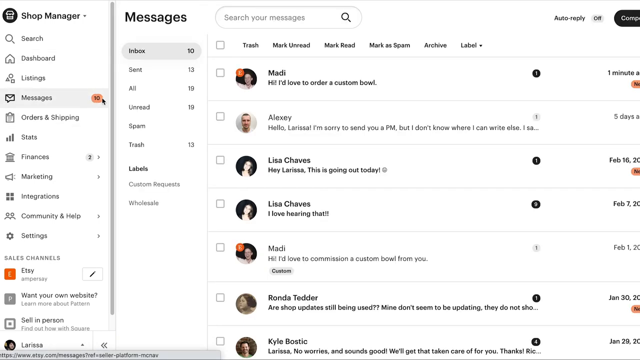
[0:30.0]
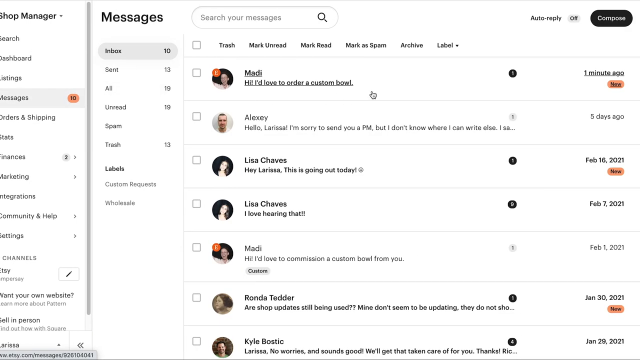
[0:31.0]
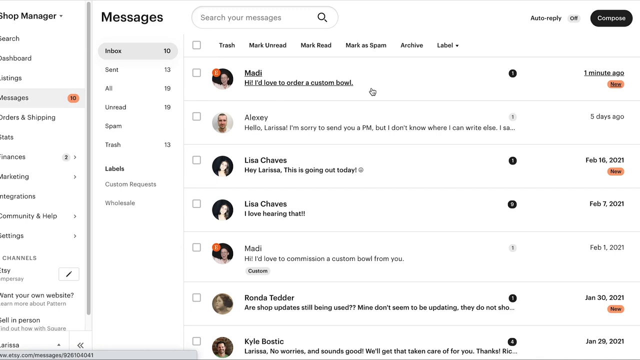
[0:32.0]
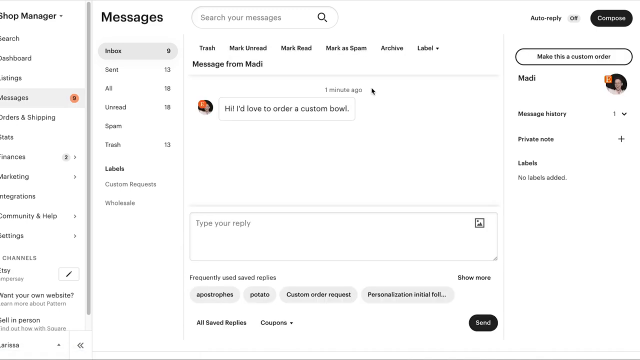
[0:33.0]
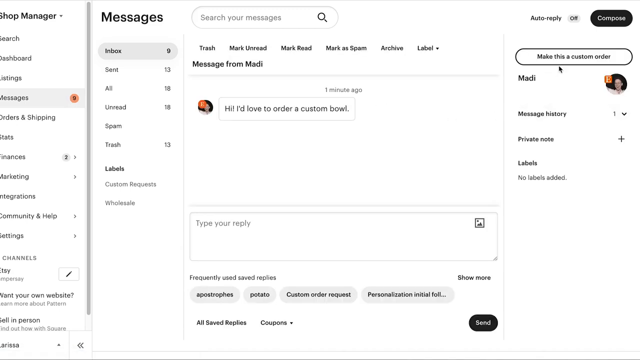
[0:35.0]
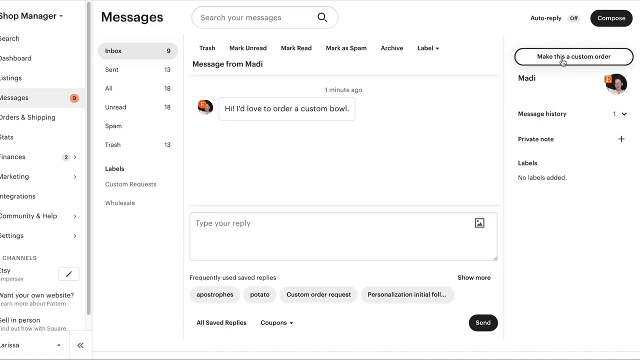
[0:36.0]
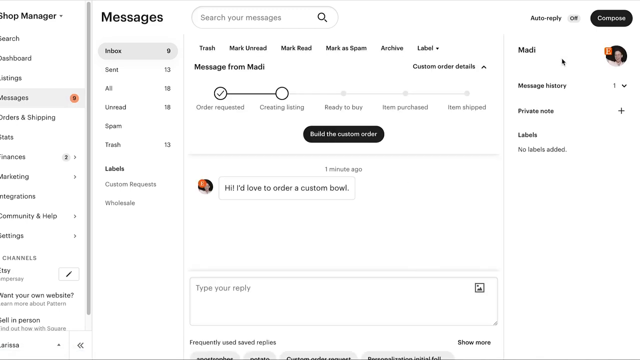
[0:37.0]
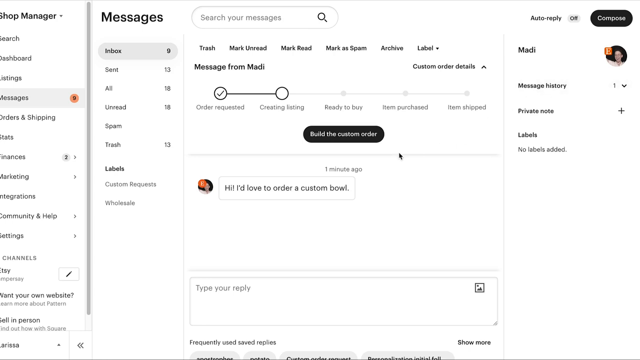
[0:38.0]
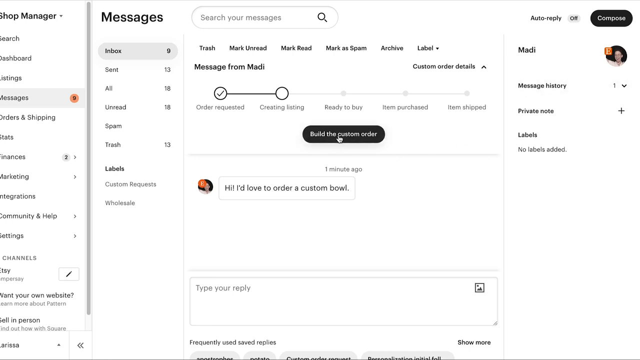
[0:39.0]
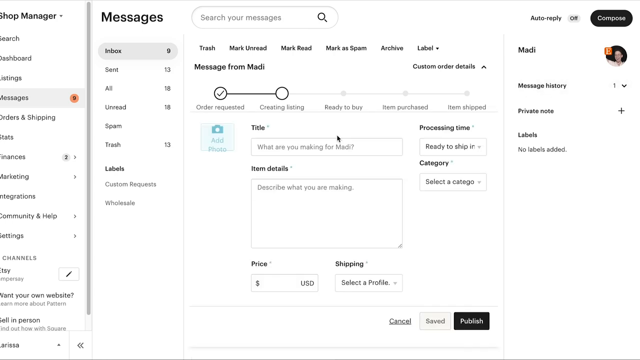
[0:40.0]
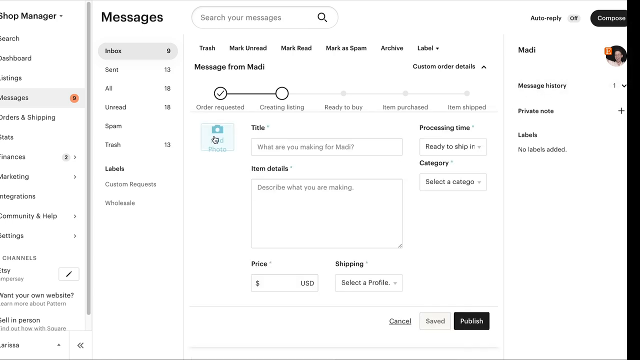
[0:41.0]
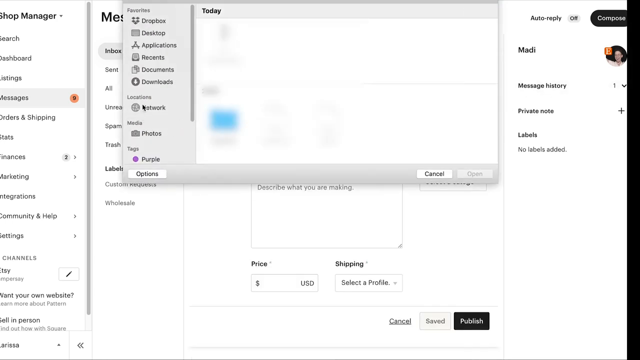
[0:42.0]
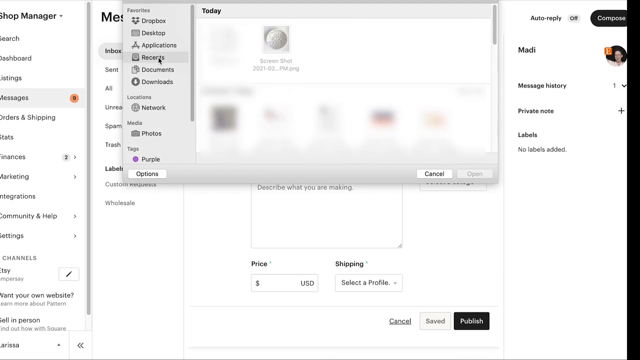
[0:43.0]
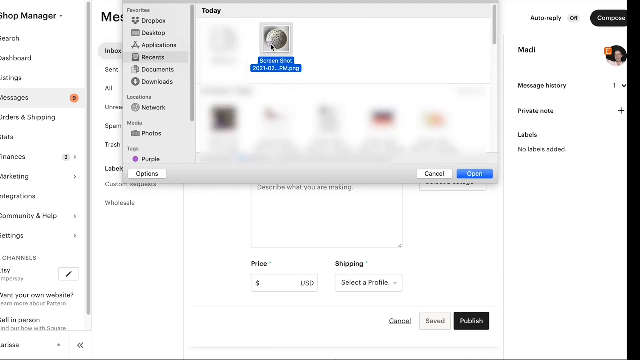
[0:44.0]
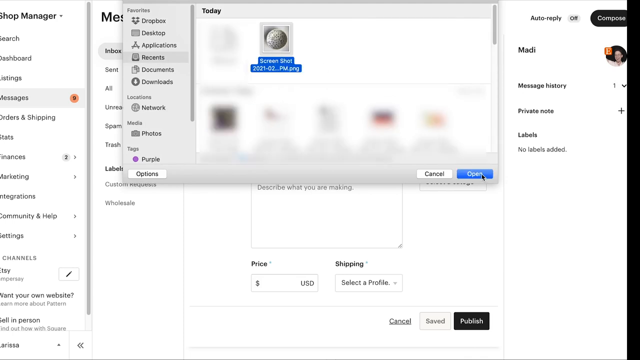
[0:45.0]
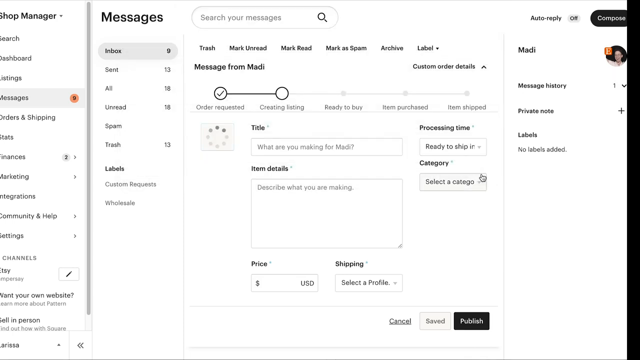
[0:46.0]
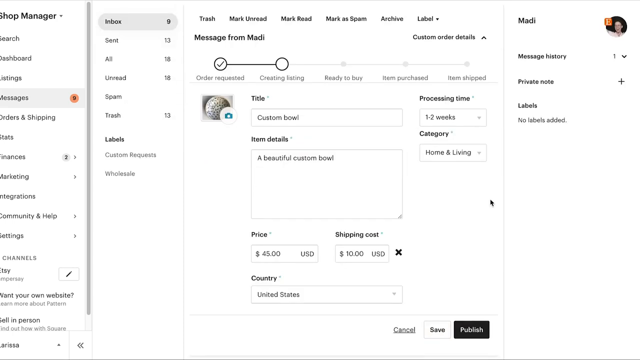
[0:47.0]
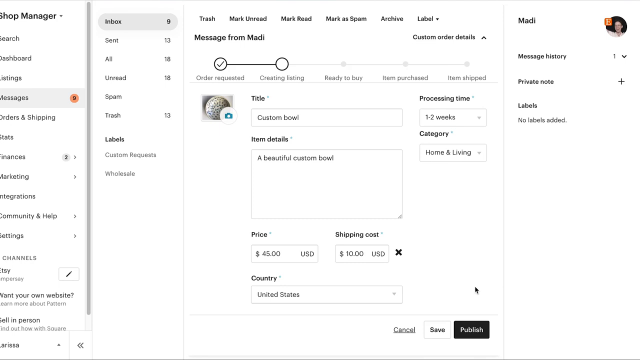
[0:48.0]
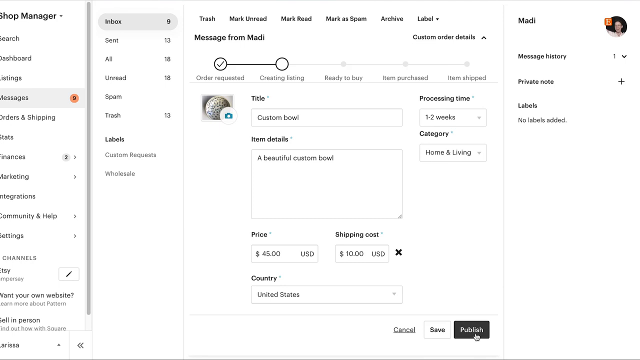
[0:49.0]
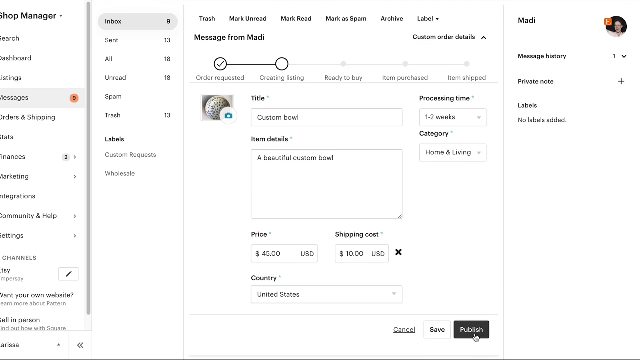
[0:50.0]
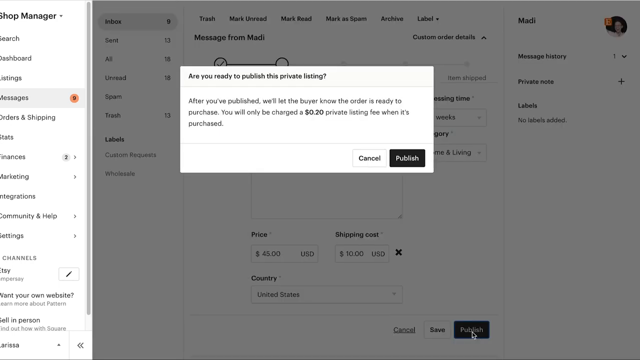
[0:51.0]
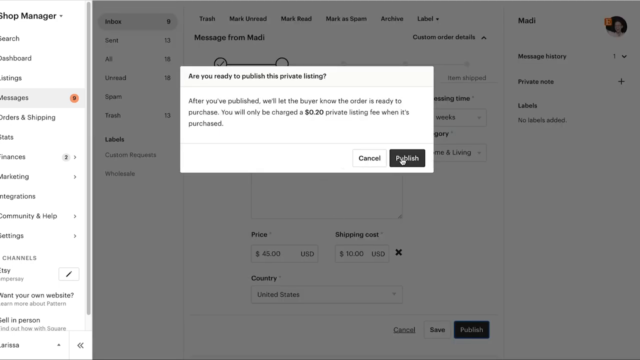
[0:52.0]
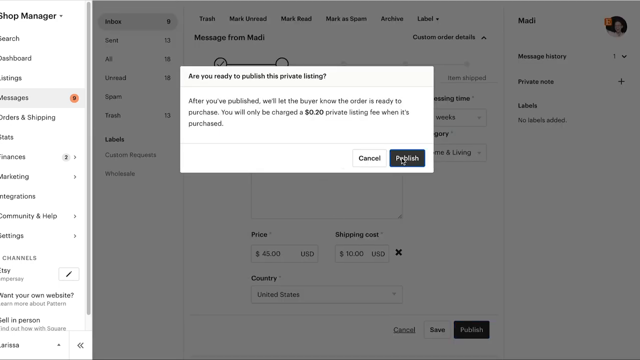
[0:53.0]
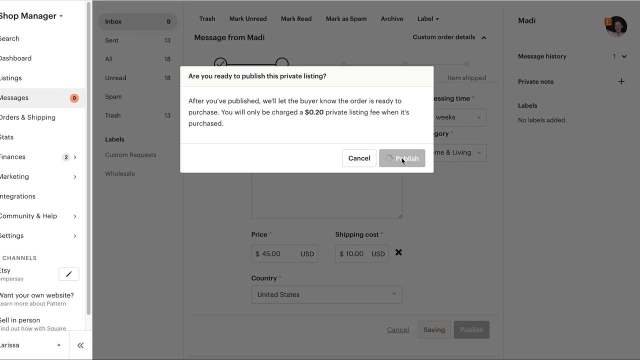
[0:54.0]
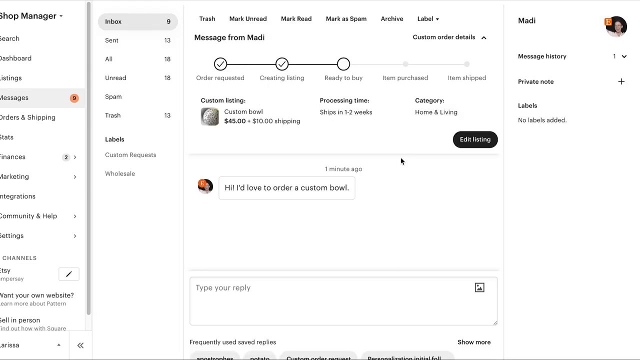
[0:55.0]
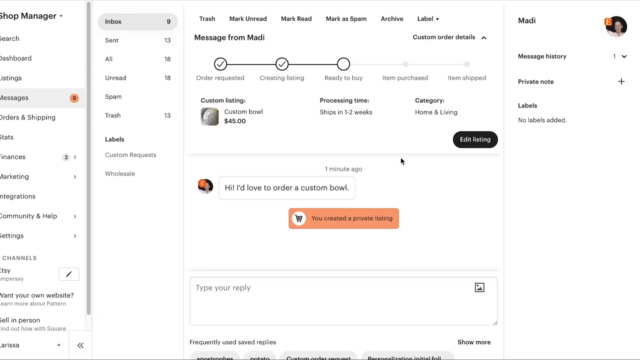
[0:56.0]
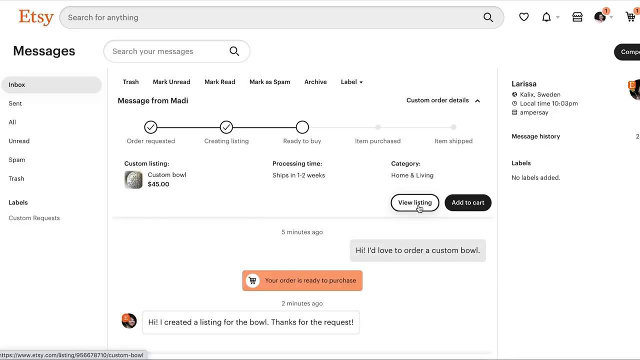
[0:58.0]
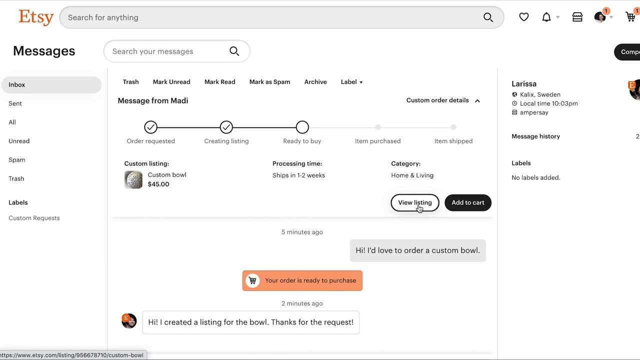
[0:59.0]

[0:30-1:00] With the messages open, there is a message from Monday that reads "I'd like to order a custom bow". The video continues with making this custom order and viewing the custom order, then goes to the option for pictures, then to cameras, where the desired camera picture is chosen. Save and publish is selected, the listing is published, and the amount that will be charged is shown. The messages then show that a private listing has been created, along with the listing and its price. Many other messages are also there.